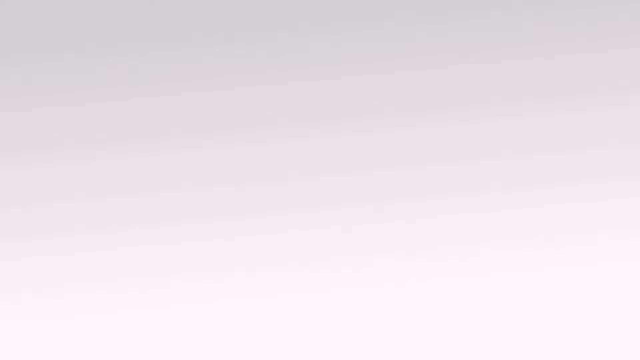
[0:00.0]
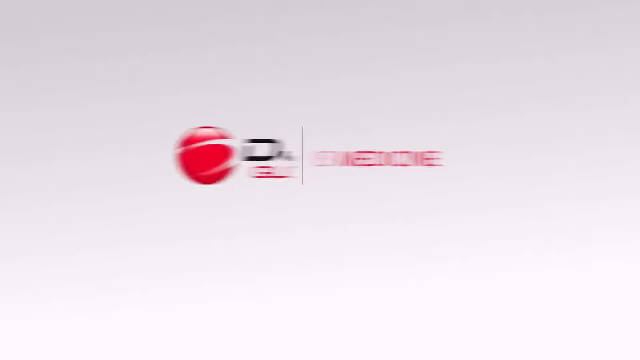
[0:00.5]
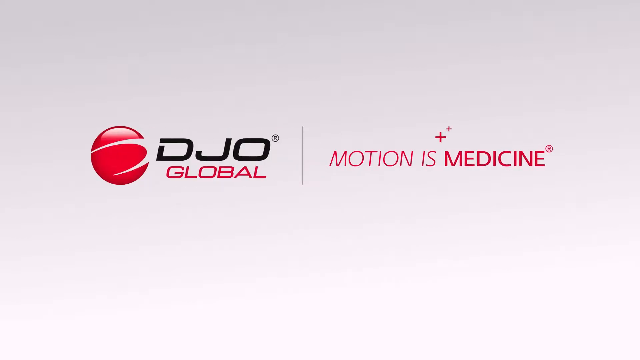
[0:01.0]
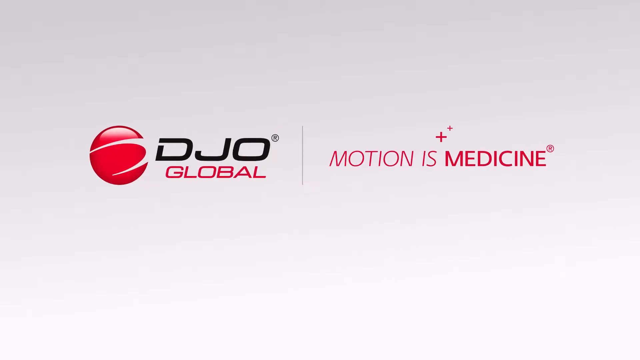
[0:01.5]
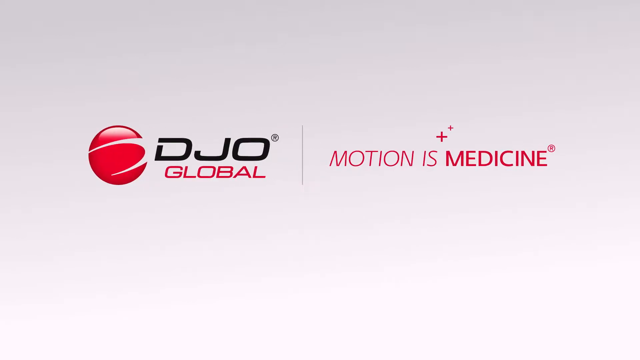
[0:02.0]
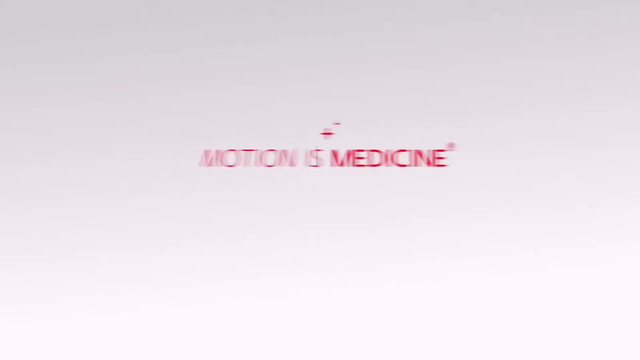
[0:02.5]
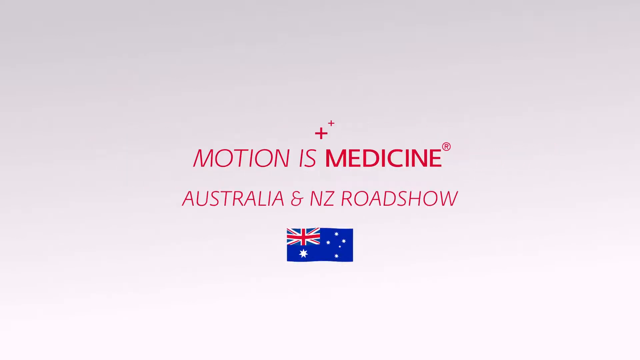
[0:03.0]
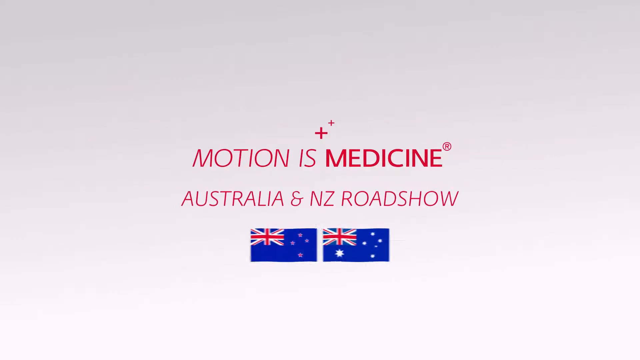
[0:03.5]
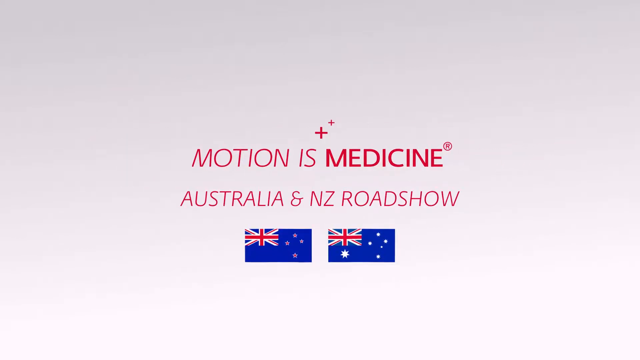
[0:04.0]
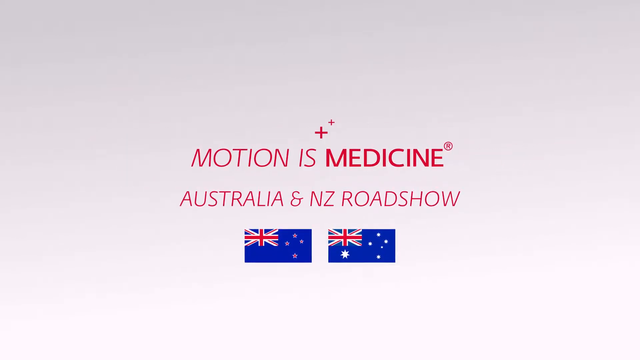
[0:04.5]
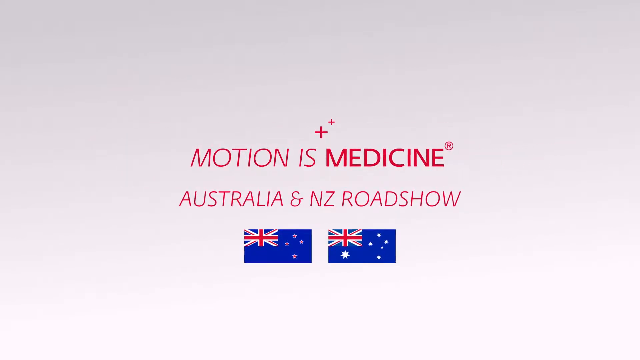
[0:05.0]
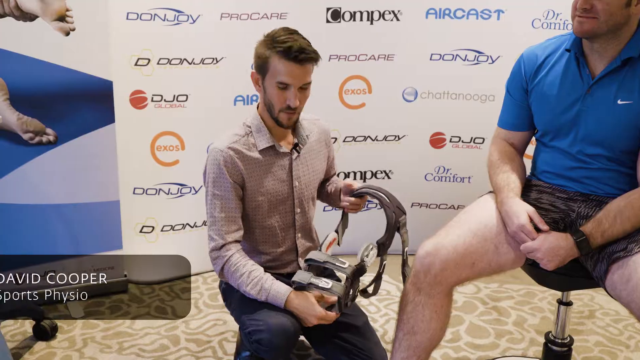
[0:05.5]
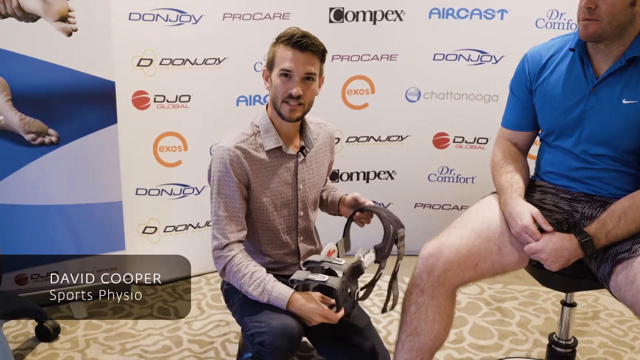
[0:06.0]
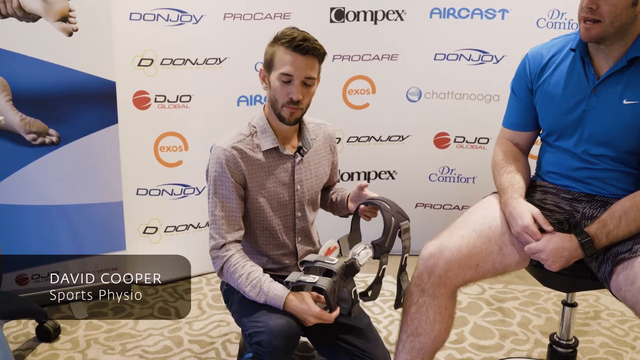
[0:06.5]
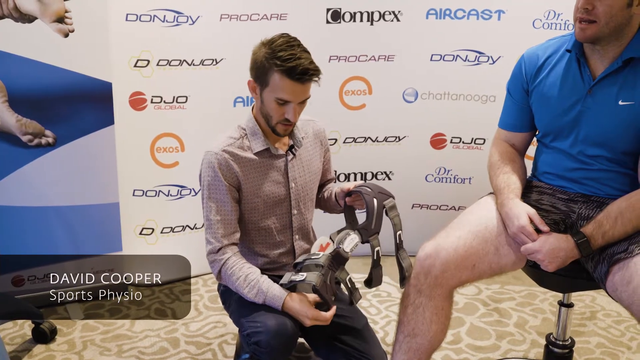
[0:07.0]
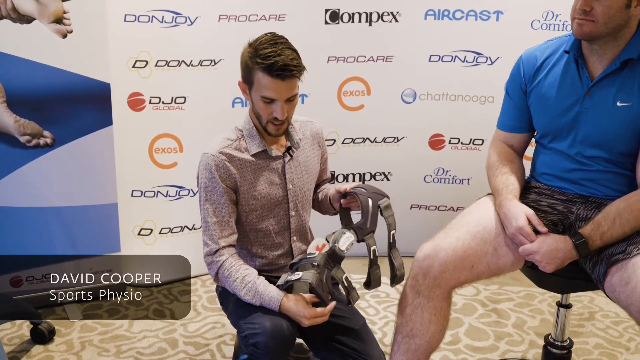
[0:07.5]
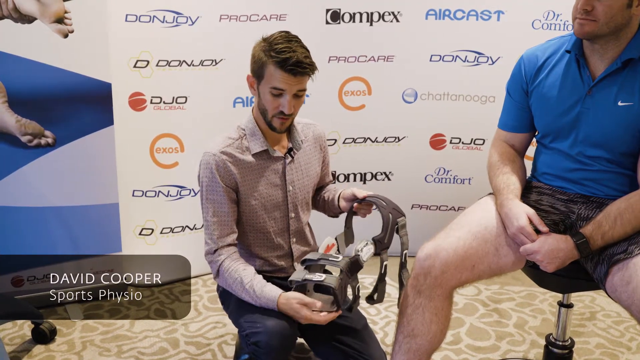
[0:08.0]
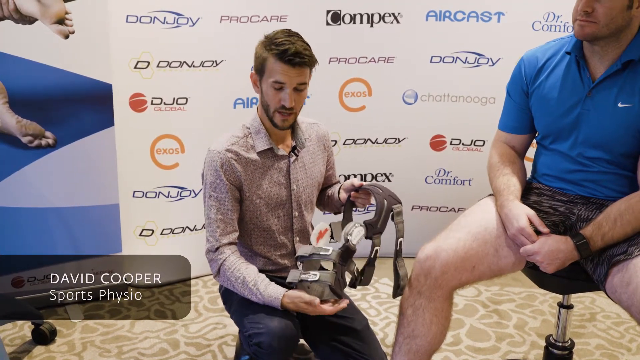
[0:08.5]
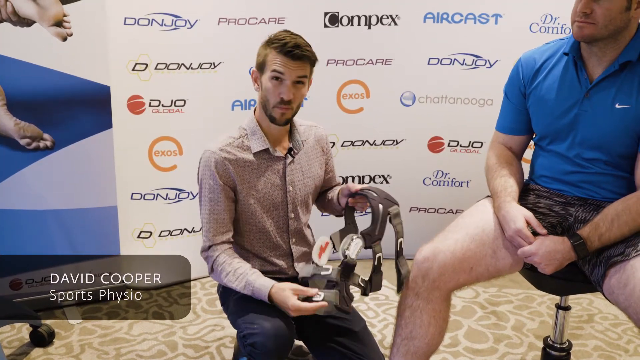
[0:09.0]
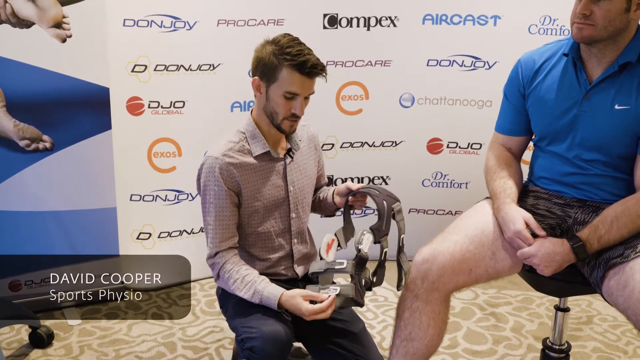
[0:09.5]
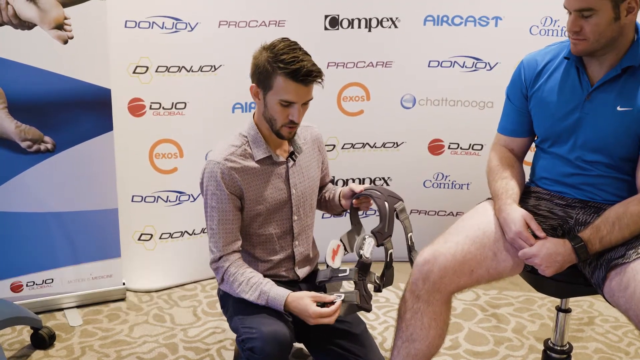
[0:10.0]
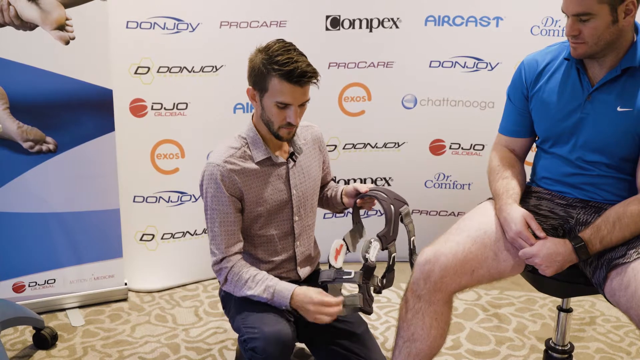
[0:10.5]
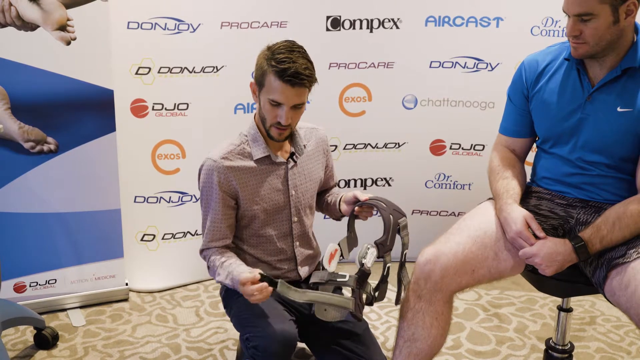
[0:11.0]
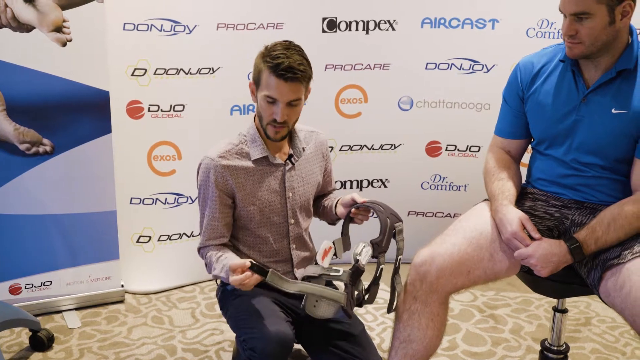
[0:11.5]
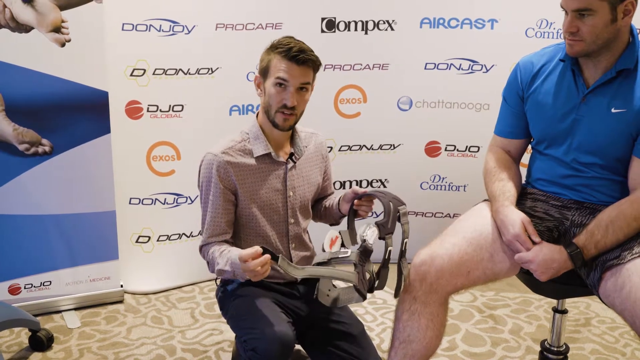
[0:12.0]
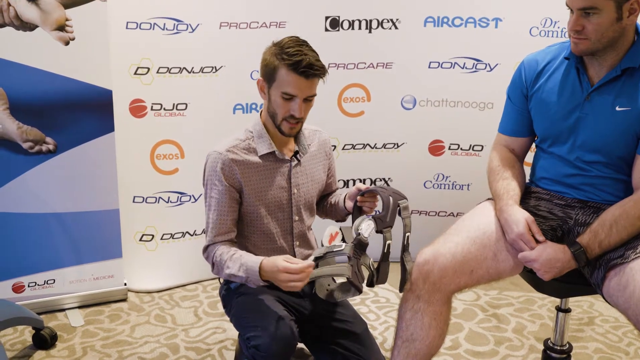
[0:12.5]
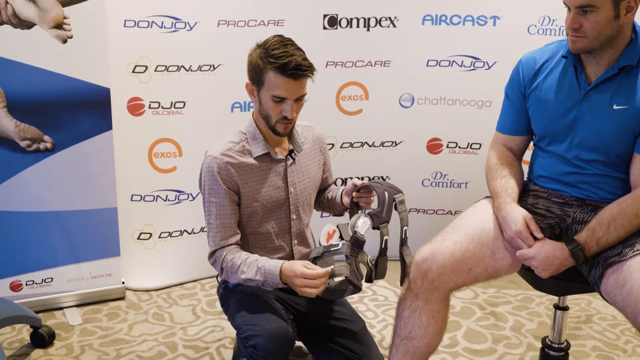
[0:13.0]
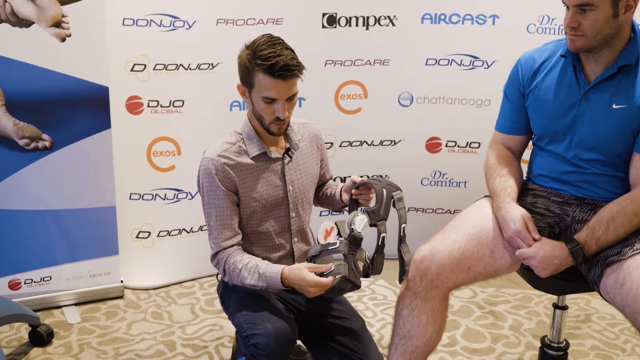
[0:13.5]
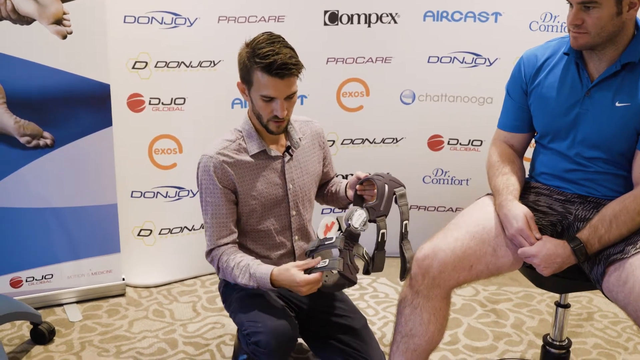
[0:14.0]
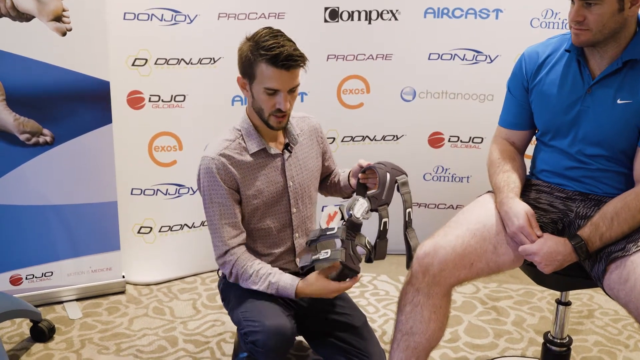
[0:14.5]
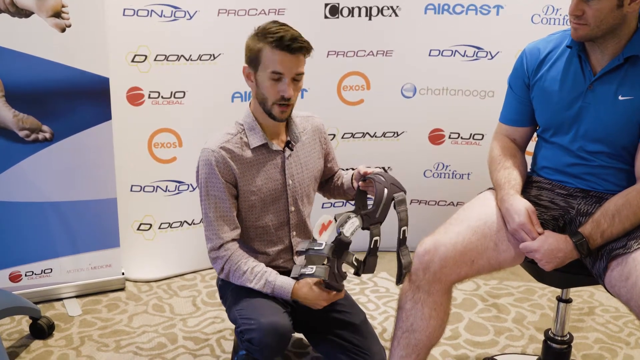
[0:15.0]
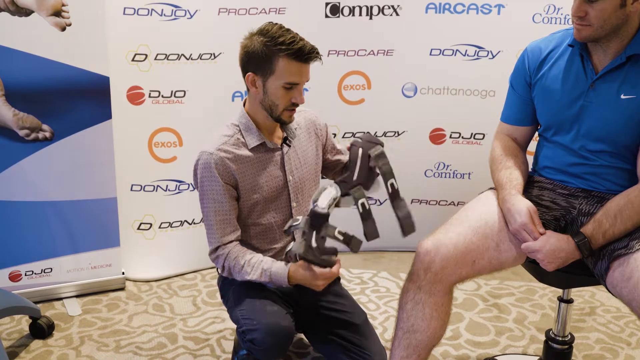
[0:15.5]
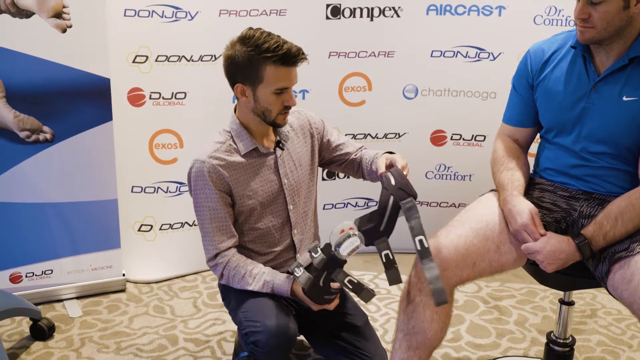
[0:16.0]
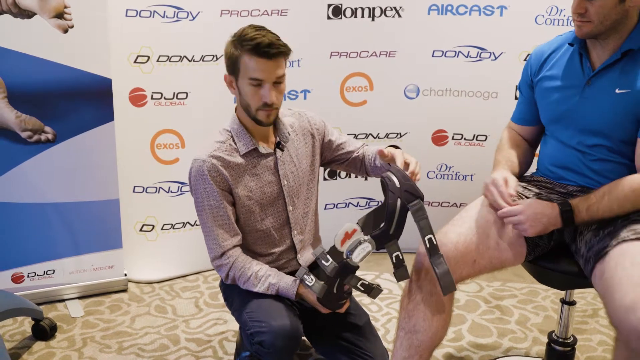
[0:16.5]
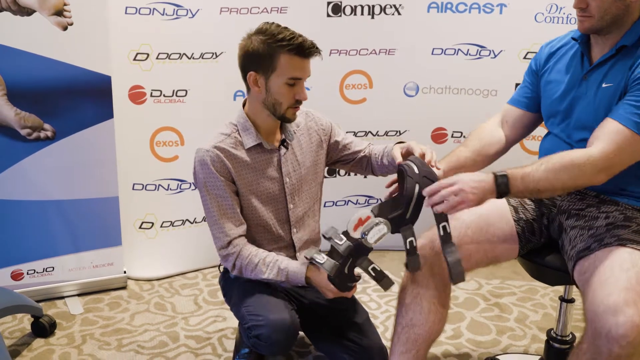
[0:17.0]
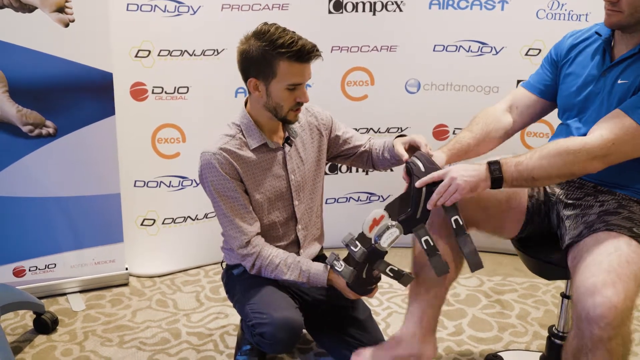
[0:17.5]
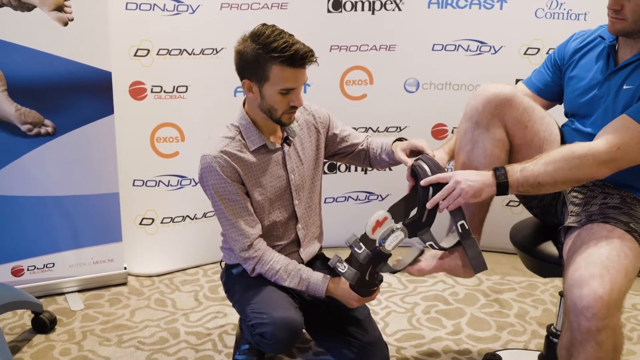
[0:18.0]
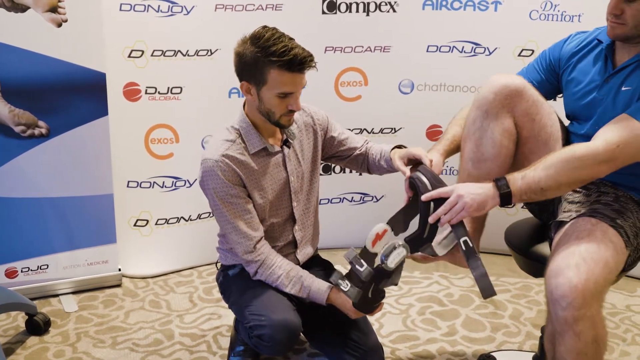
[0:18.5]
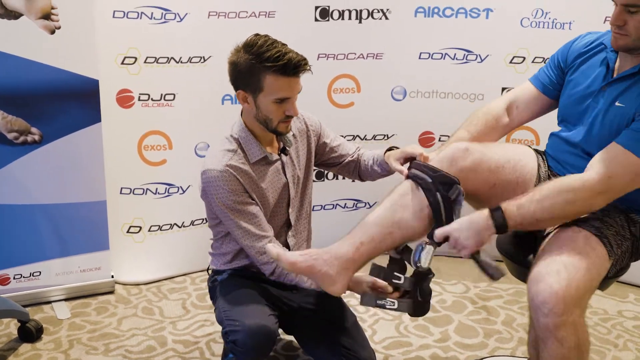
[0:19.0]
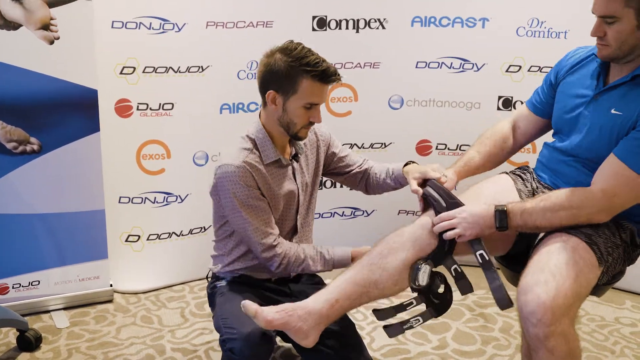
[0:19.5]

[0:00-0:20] The video opens on a light gray background with a logo for DJO Global on the left side and the text "Motion is Medicine" on the right. Underneath that it says "Australia and New Zealand Roadshow," and beneath that is an Australian flag. A man in a light brown button-up shirt and dark slacks then gives a demonstration, and text in the bottom left corner reads "David Cooper, sports physio." He kneels on one knee, holding in his hands a device that looks like a knee brace with a number of straps on it. In front of him, a man in dark shorts and a blue short-sleeved Nike polo shirt sits in a chair with the leg of his shorts rolled up on his right side. The kneeling man holding the brace appears to talk for a bit, then turns to the other man, who slips his leg through the brace.